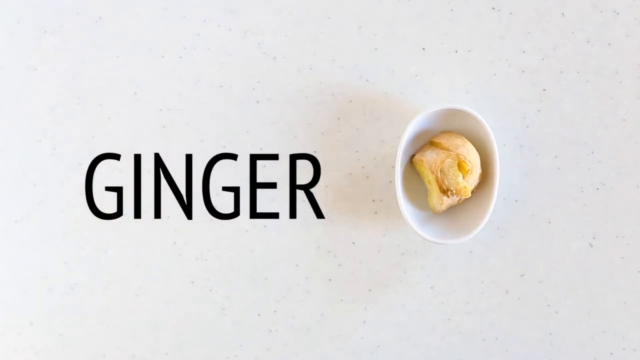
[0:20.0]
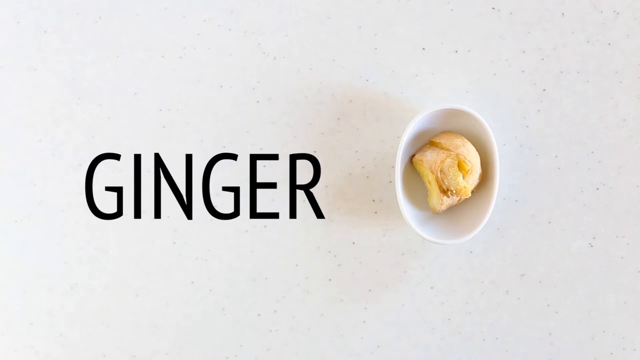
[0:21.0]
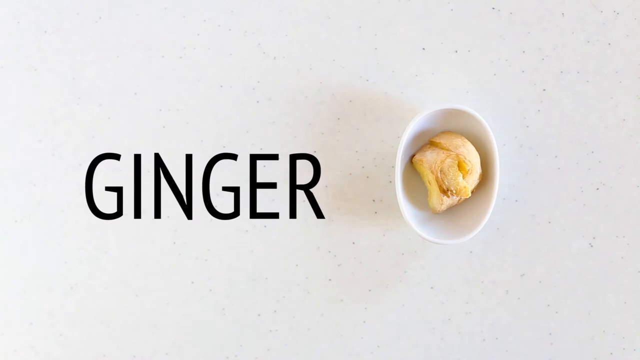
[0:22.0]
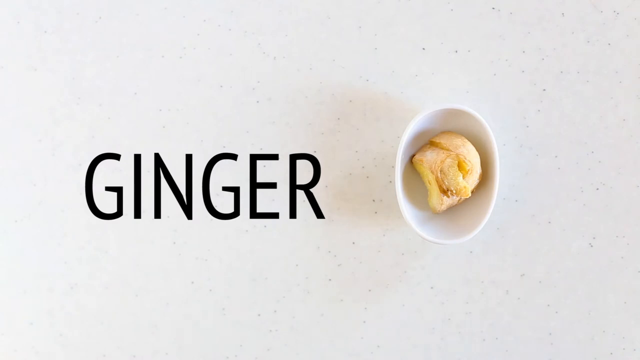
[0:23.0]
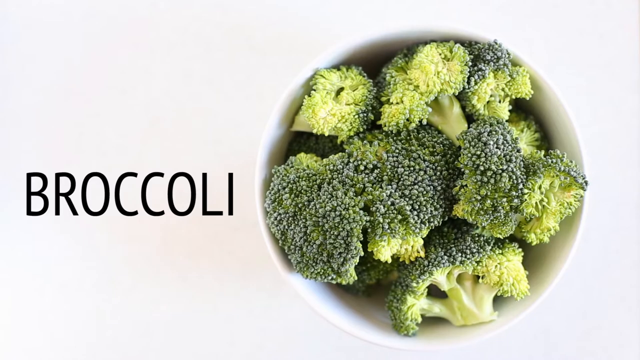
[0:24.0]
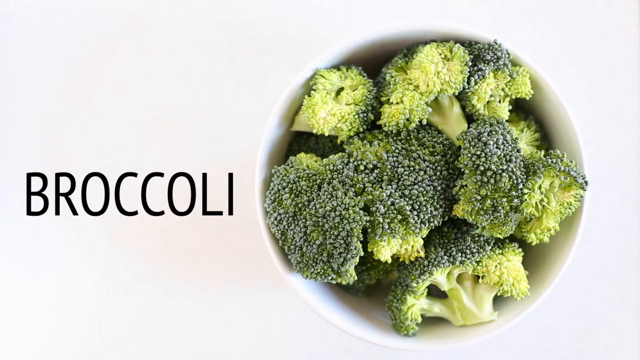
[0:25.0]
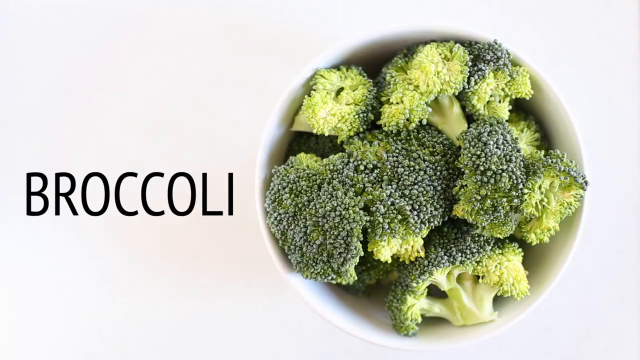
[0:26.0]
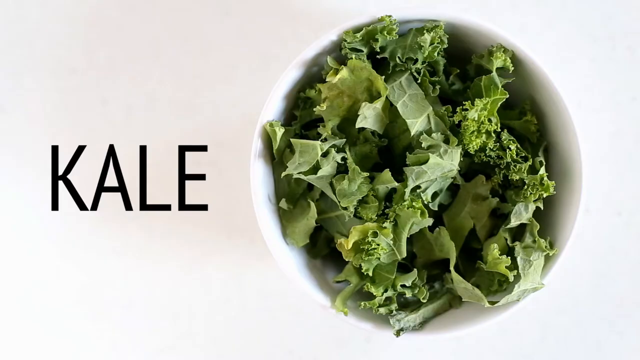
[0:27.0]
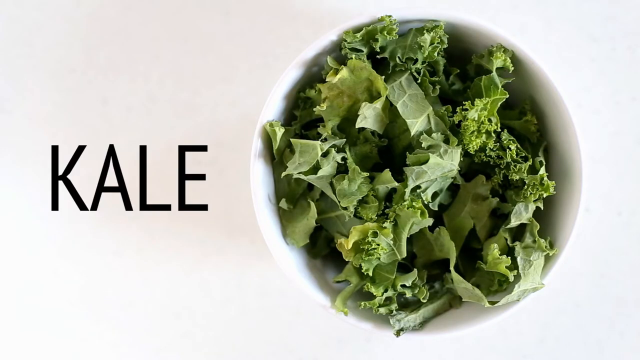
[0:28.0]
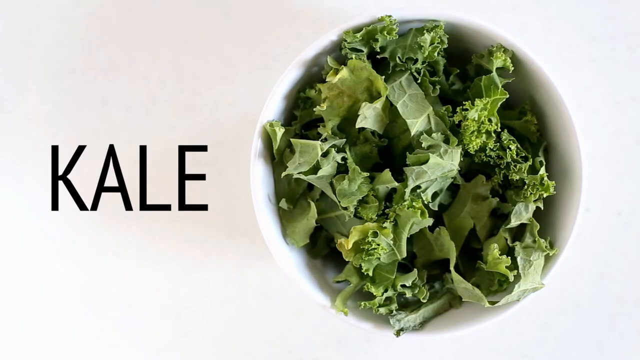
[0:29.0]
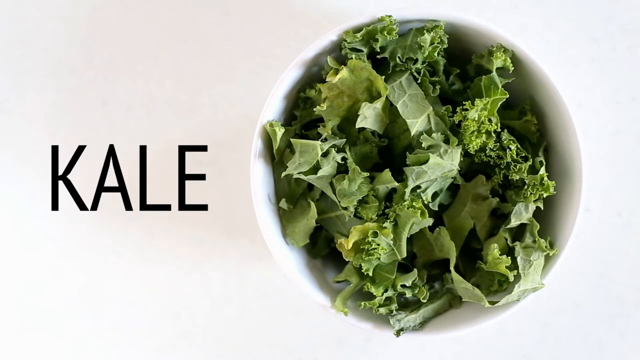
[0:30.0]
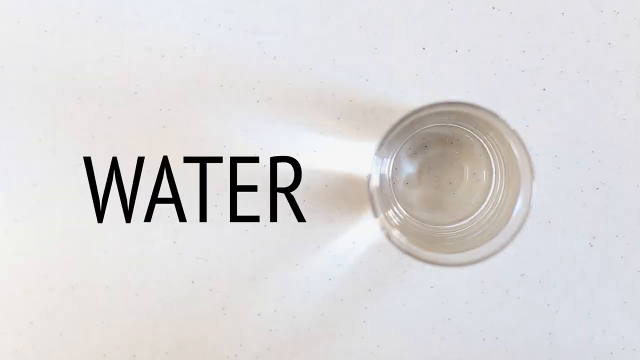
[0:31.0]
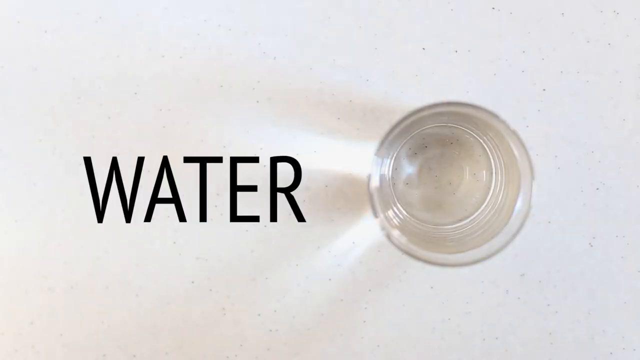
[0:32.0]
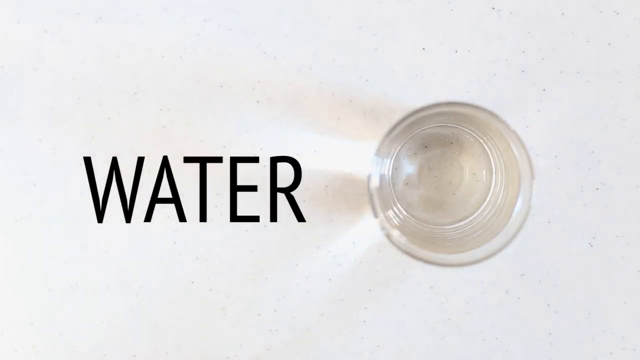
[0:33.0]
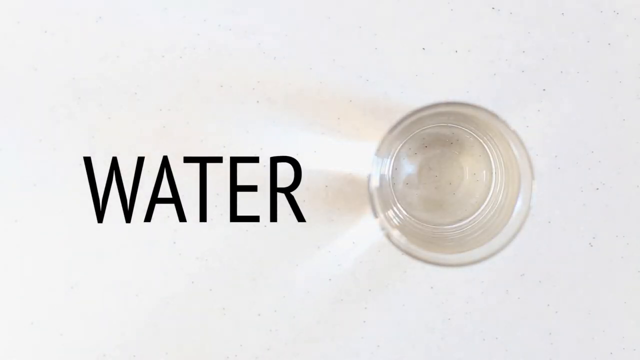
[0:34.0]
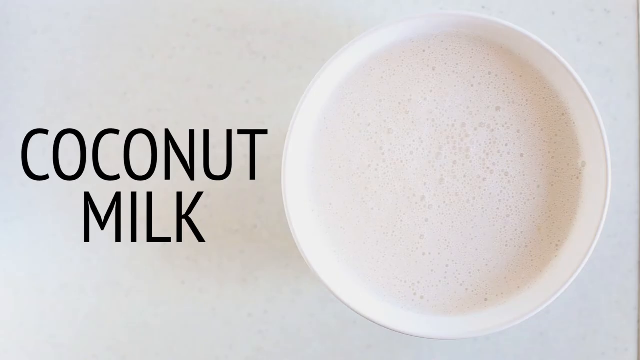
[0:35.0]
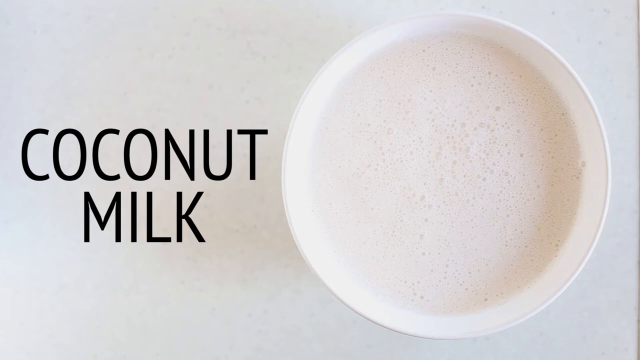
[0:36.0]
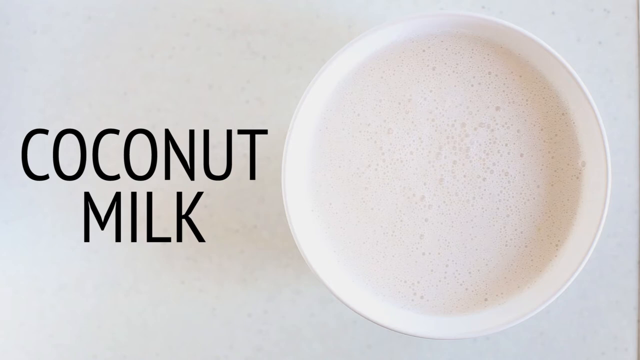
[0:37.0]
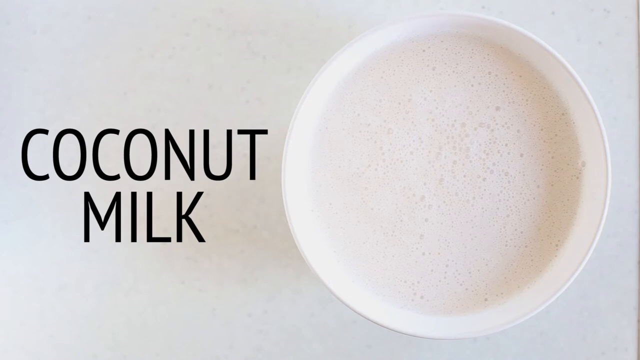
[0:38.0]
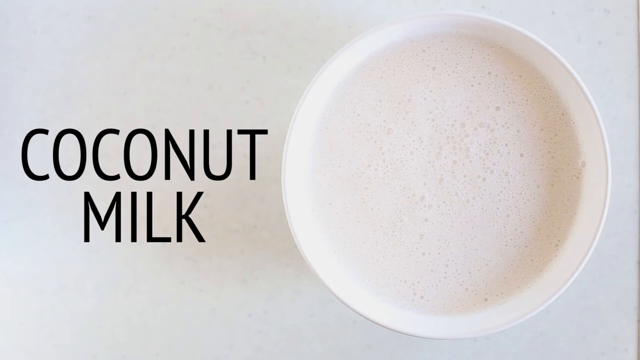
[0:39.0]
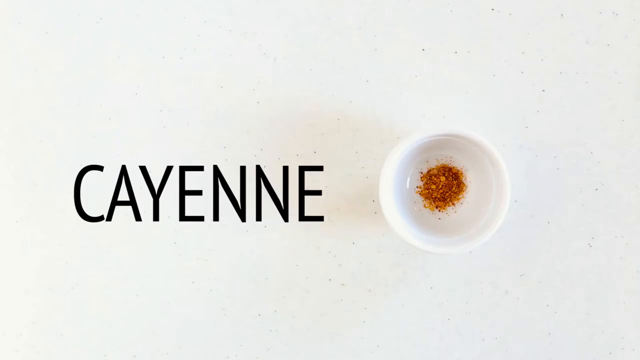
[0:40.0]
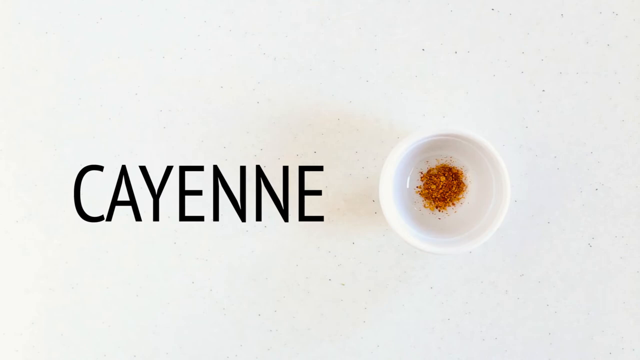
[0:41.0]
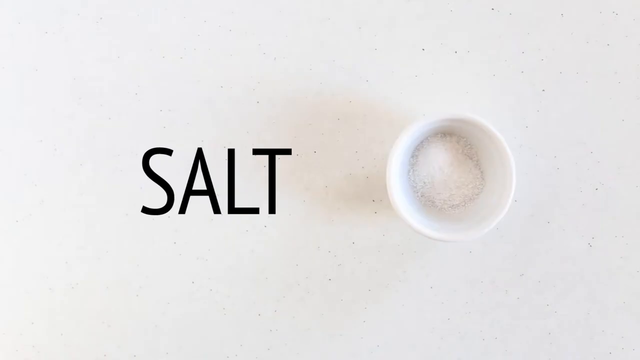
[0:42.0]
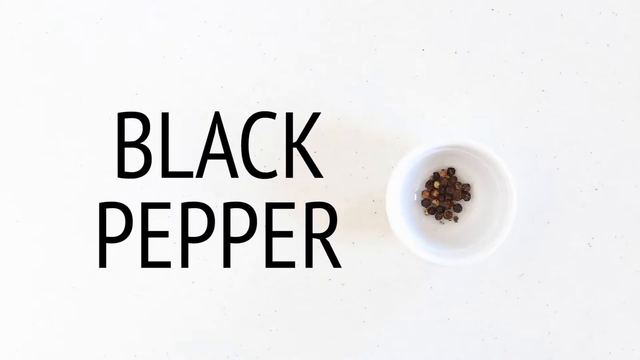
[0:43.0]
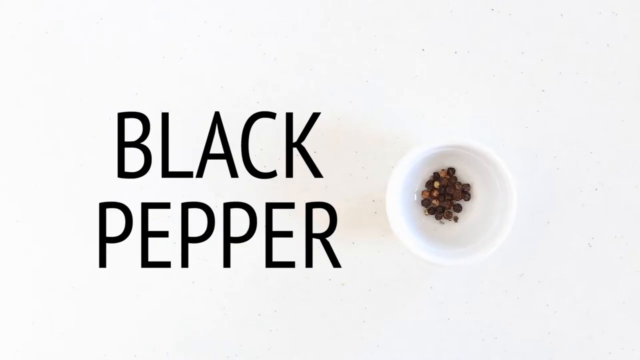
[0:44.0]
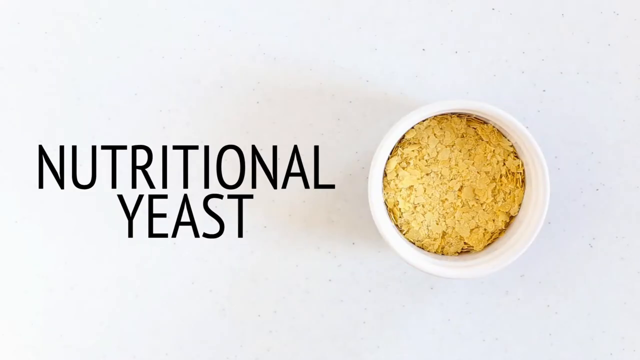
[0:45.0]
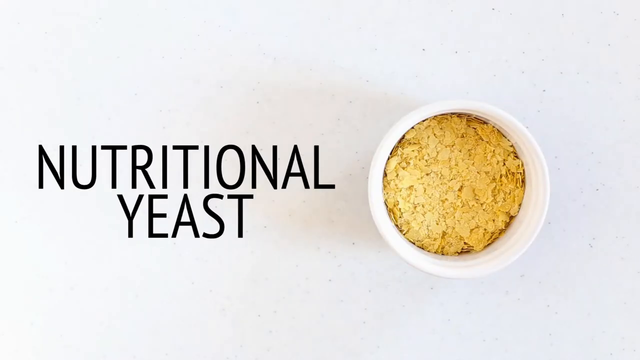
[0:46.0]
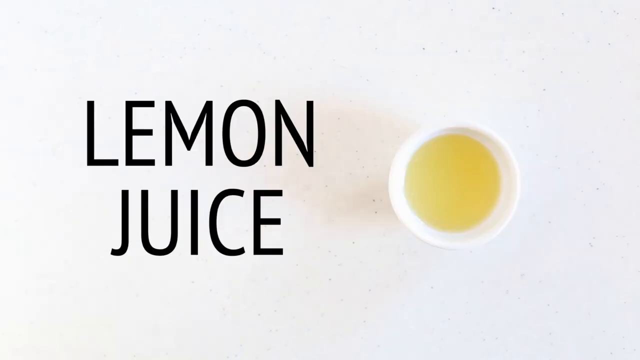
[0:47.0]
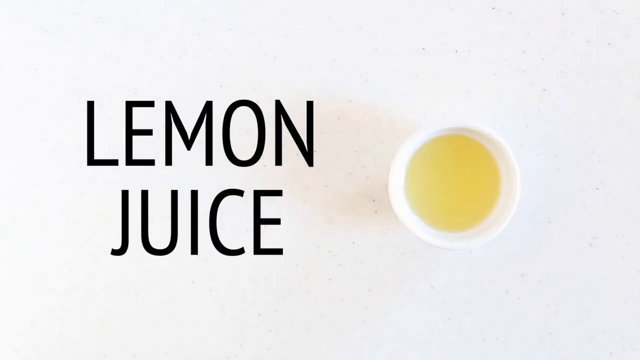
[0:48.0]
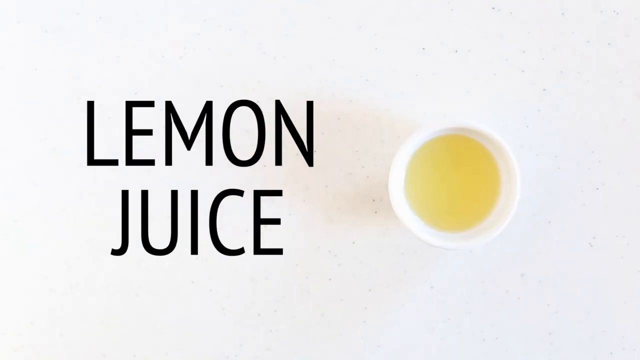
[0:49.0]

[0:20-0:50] The camera is focused on the ginger. Next, the word "broccoli" is written in black beside a bowl of broccoli. The camera stays focused, then moves to the word "kale" written in black and a bowl of kale. In the next image, "water" is written in black with a small white bowl of water. Then "coconut milk" is written in black with a white bowl of coconut milk, followed by the word "cayenne" in black with a small bowl of cayenne powder. The word "salt" appears in black with a small bowl of salt next to it, then "black pepper", also in black, with a small bowl of black pepper. Next come the words "nutritional yeast" and a white bowl of yellow yeast. Finally, "lemon juice" is written in black, with a white bowl of lemon juice next to it.